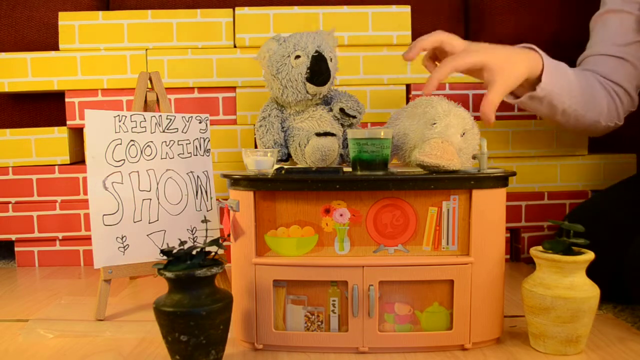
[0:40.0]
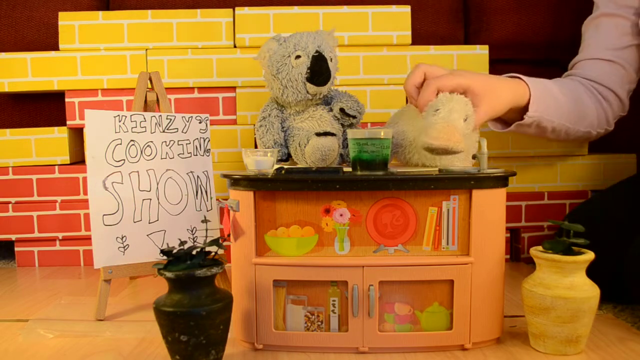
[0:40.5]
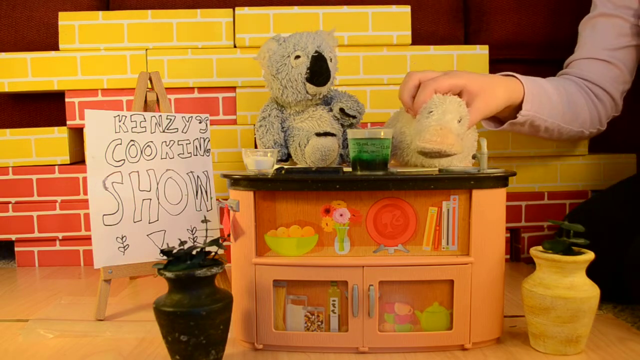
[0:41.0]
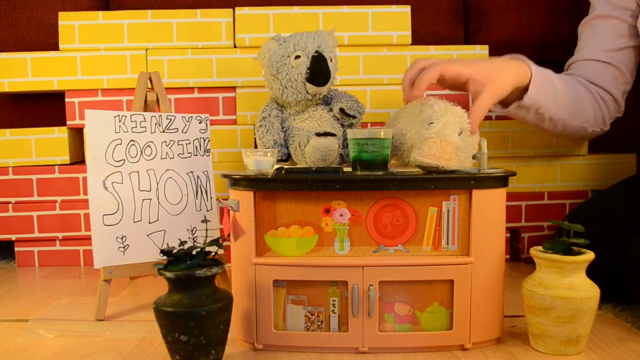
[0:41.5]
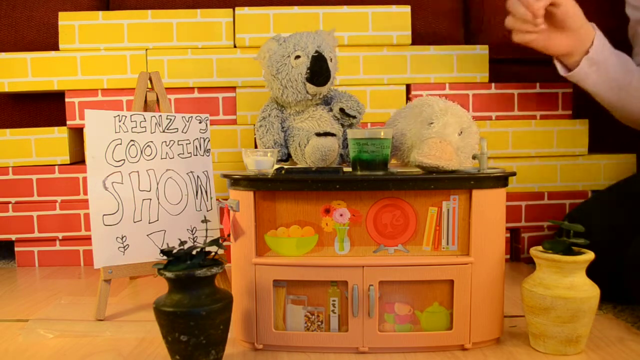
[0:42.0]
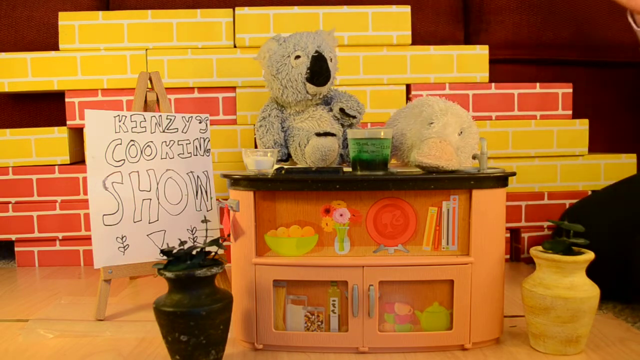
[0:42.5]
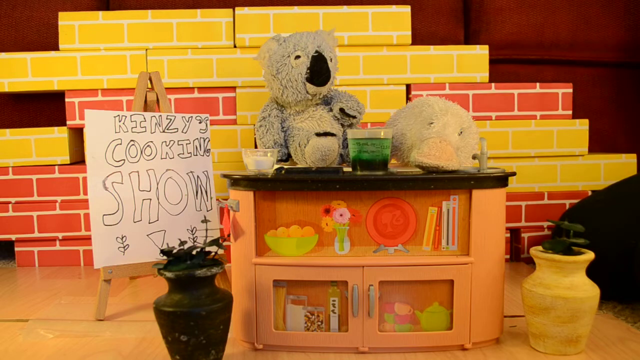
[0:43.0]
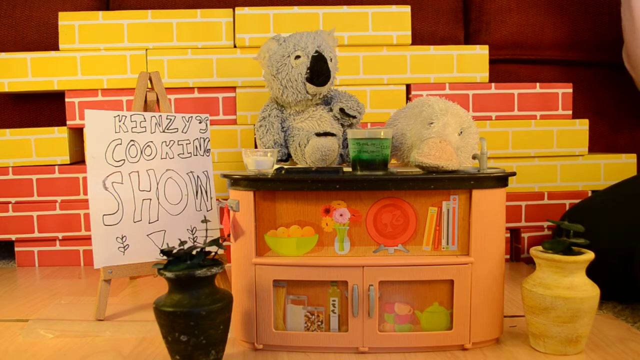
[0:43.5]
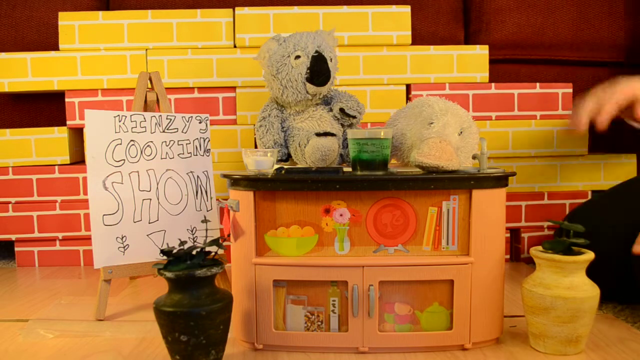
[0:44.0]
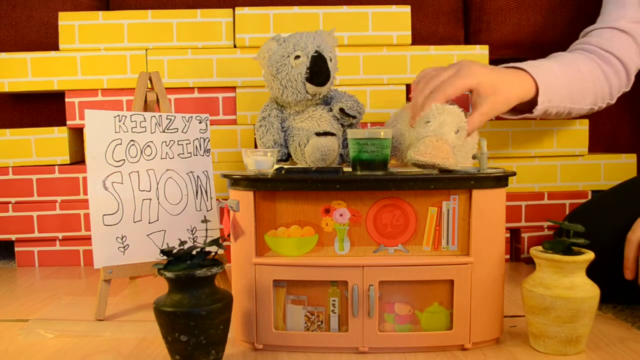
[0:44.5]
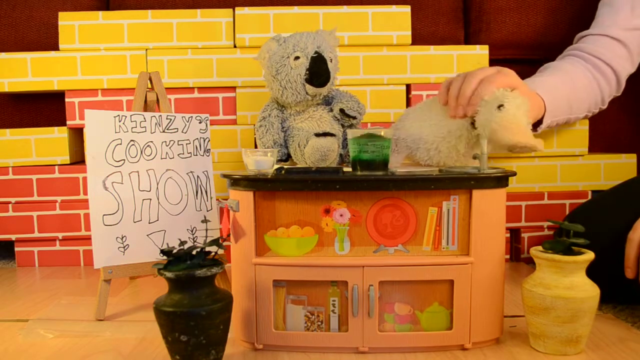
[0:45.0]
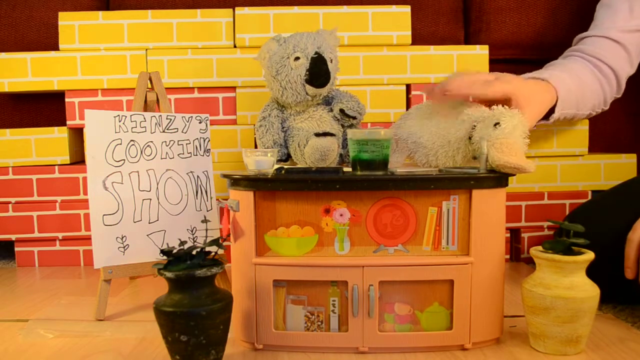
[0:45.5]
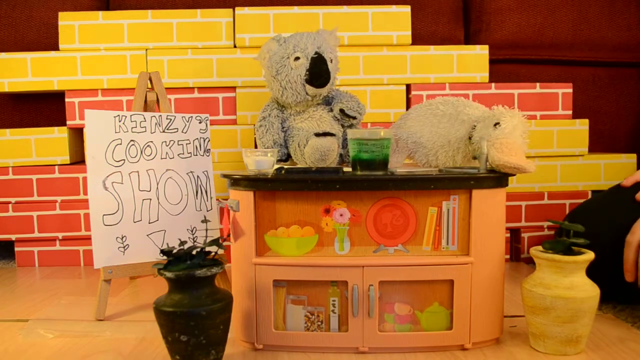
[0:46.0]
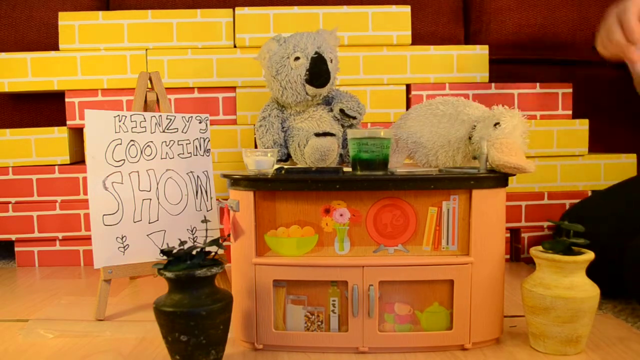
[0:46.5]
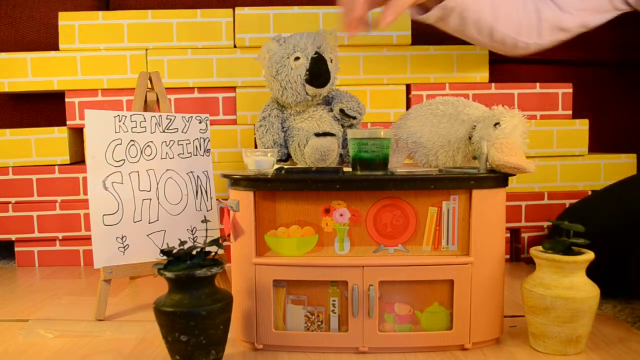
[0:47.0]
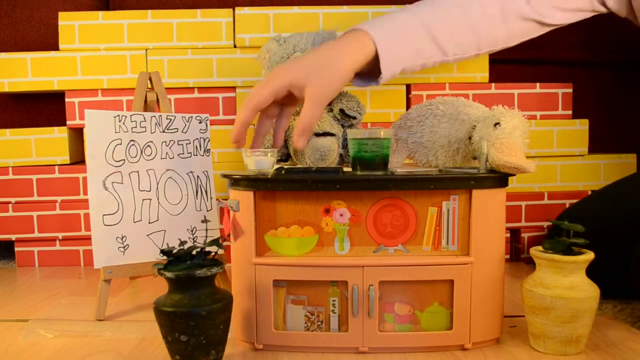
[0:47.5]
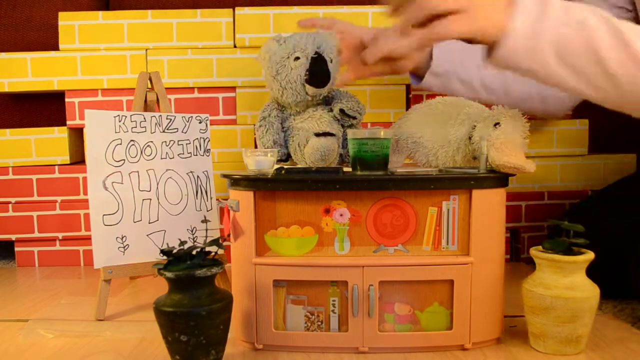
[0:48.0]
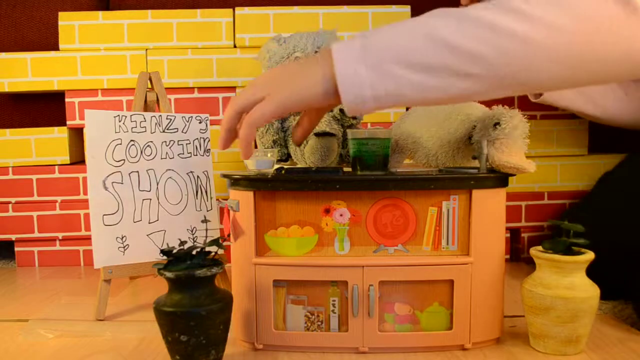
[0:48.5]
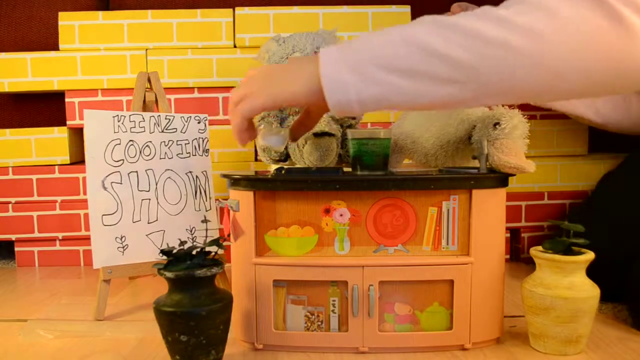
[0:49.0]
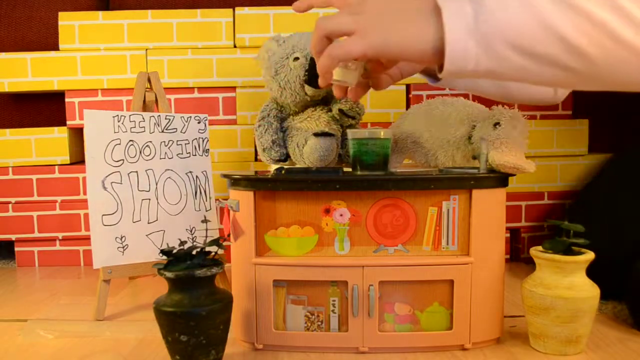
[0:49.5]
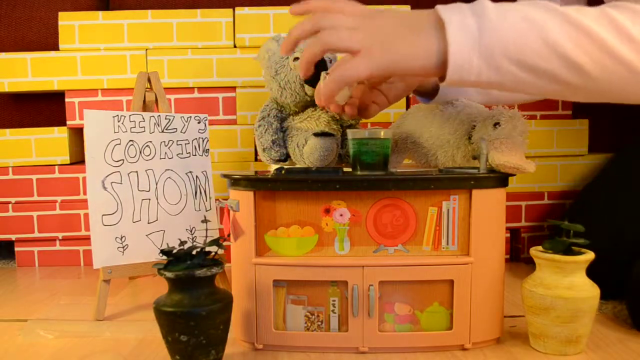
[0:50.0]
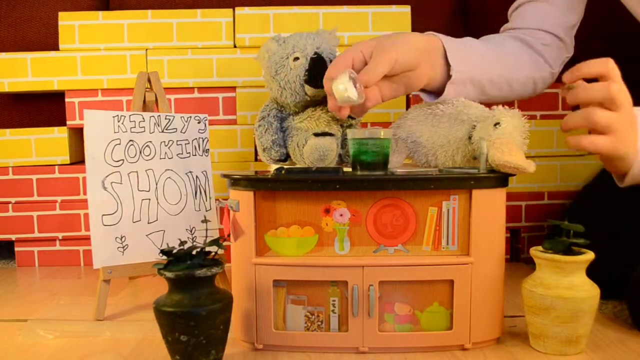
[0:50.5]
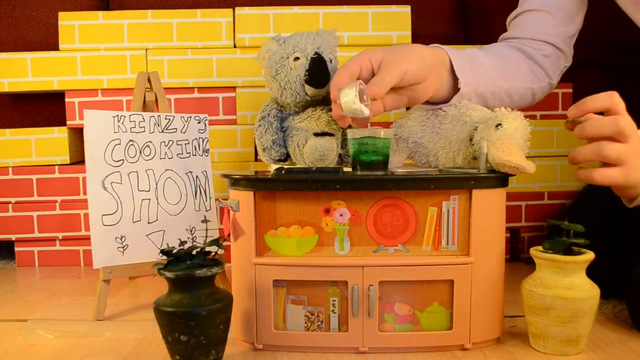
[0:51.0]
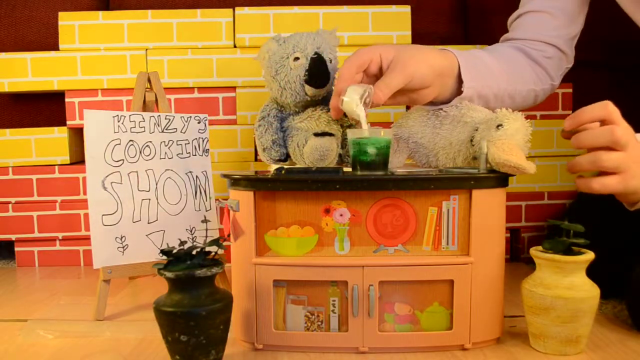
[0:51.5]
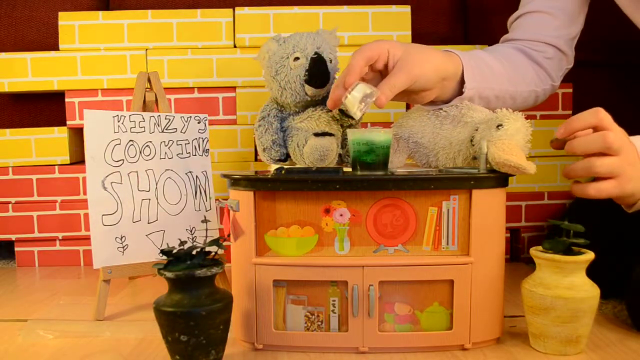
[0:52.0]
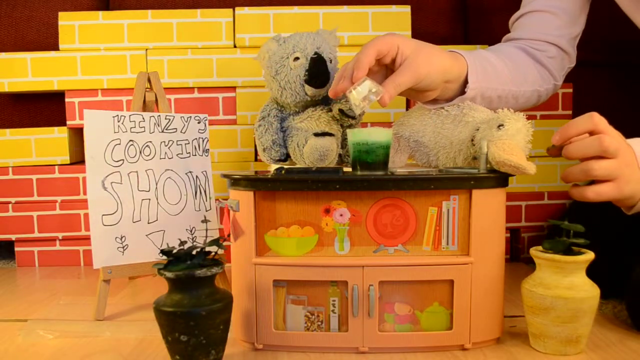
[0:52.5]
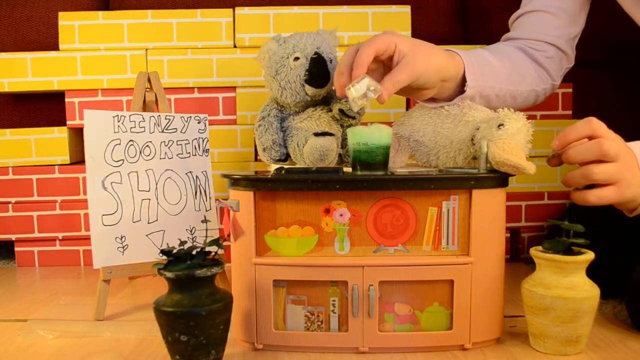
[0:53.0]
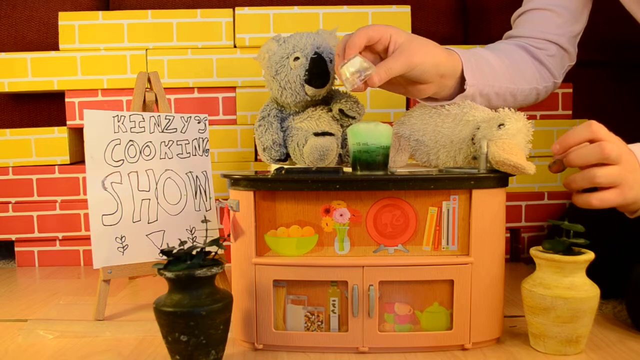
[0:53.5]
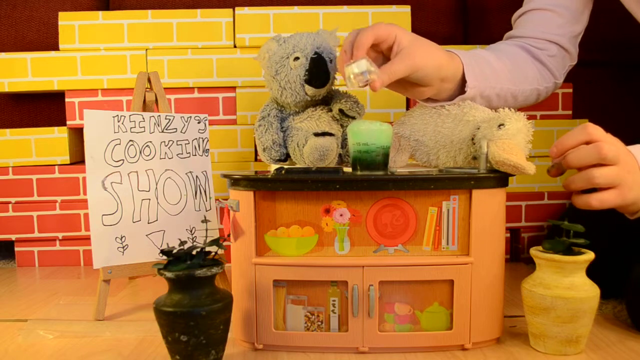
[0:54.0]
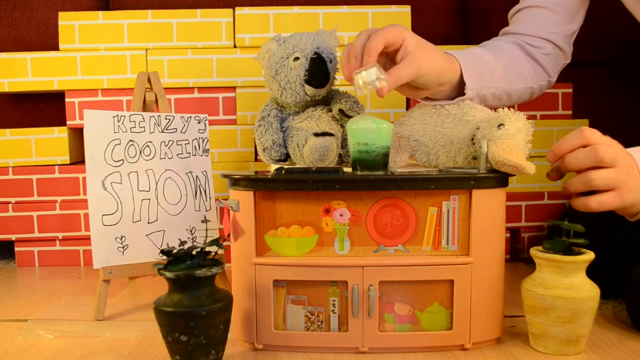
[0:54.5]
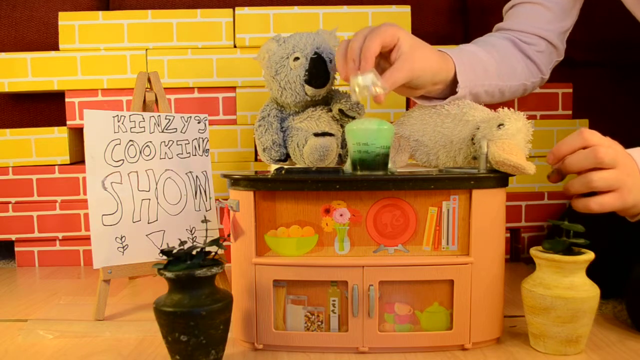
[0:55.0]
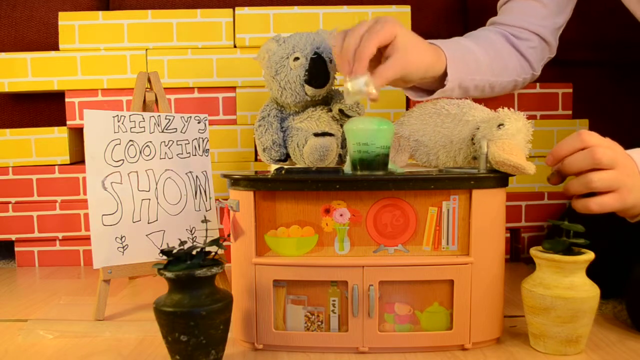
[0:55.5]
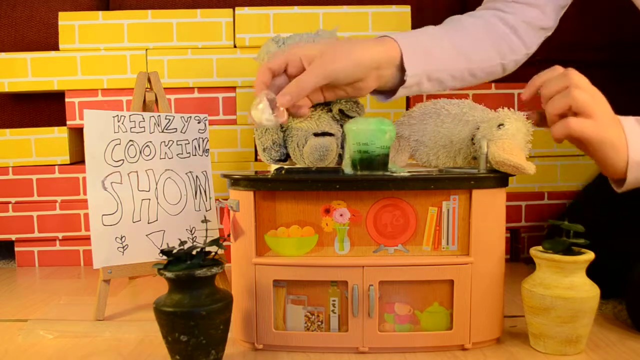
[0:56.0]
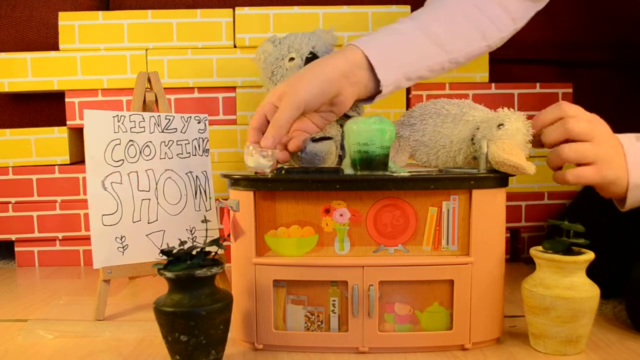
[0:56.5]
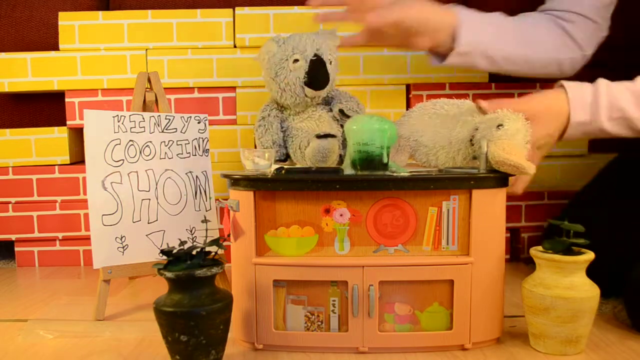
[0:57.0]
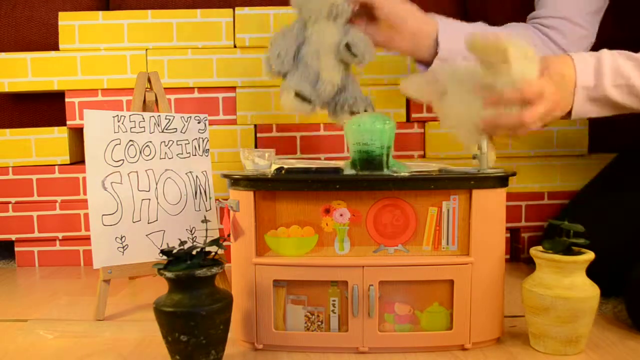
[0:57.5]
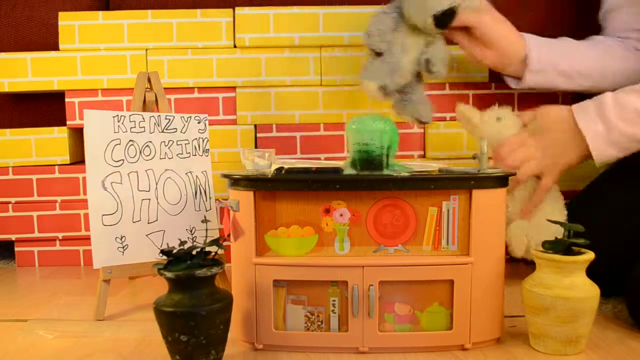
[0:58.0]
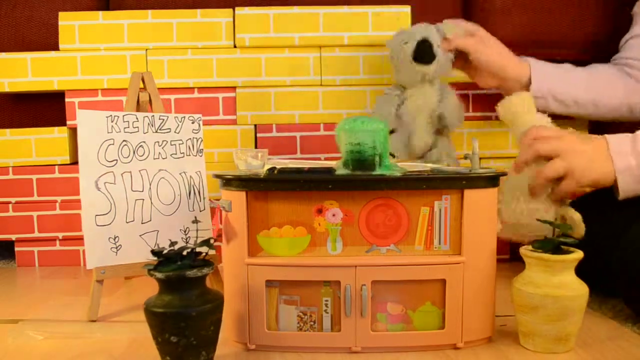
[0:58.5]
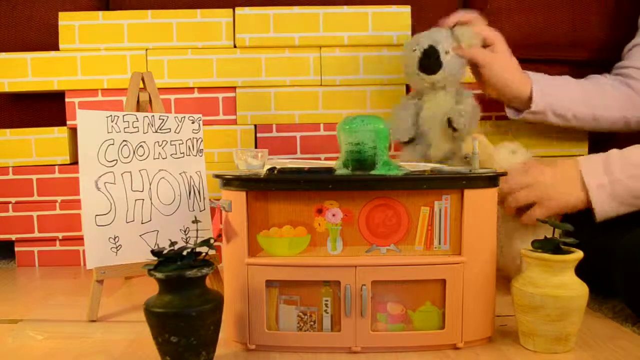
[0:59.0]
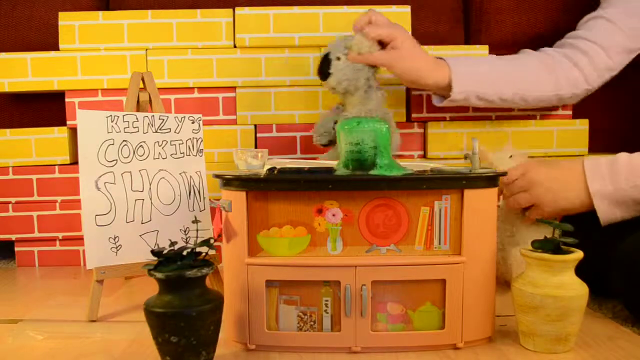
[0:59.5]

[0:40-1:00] A human hand stretches in from the right corner of the frame. It touches the fluffy, dark toy, then the duck, and then goes to a bowl of white substance that seems to be salt. The person takes it and adds it to another bowl full of a green substance. After the white substance is added, white froth foams up out of the jar, fills it and overflows onto the table. The hand then picks up the teddy bears and the duck and removes them. On the left side is a whiteboard with the handwritten words "Kinsey's cooking show," resting on a ladder. Behind the ladder is a wall of bricks painted yellow and red, with white coloring separating the yellow bricks.